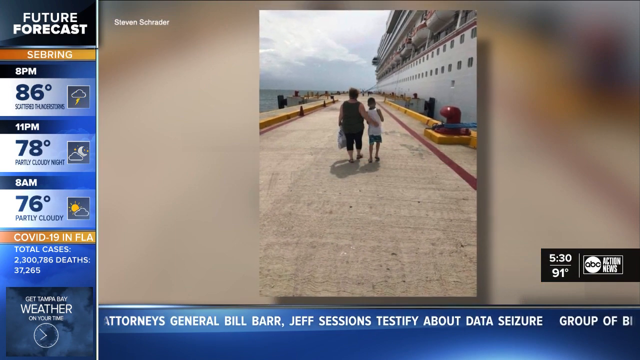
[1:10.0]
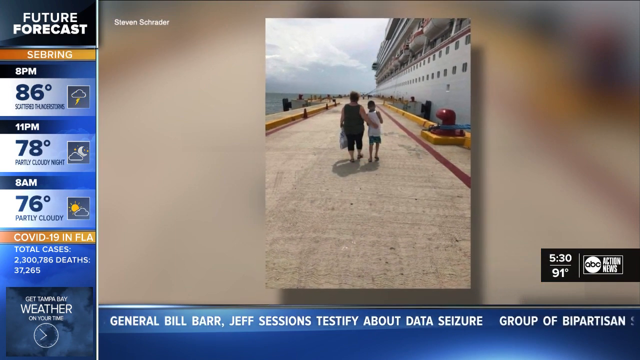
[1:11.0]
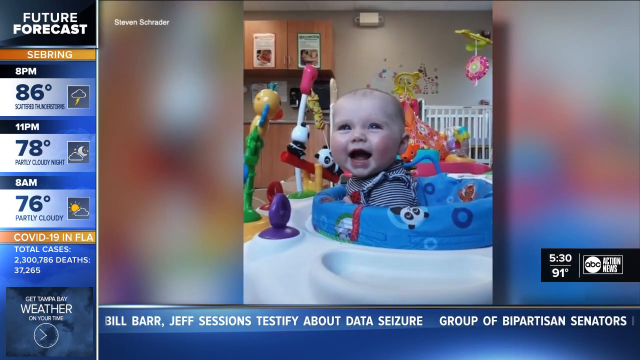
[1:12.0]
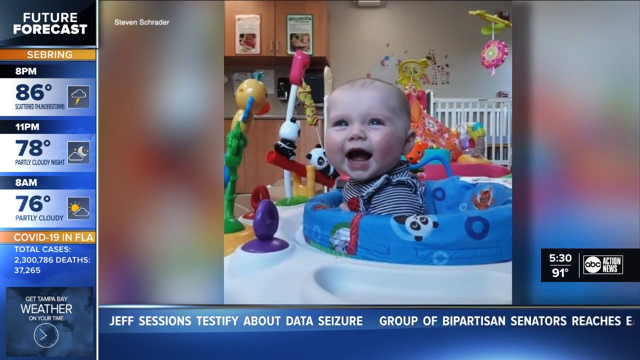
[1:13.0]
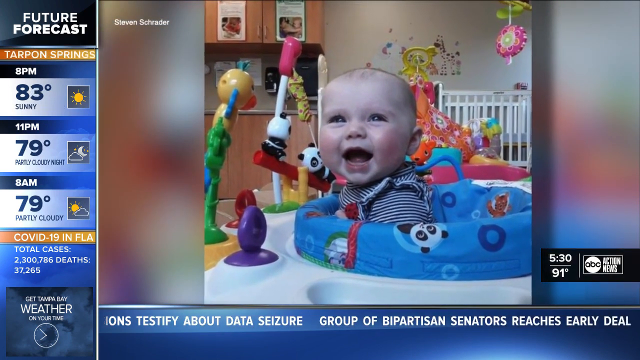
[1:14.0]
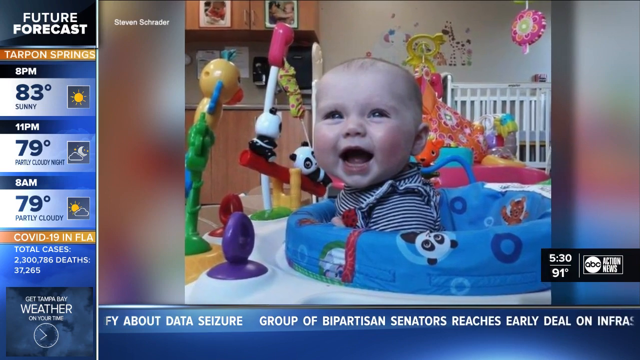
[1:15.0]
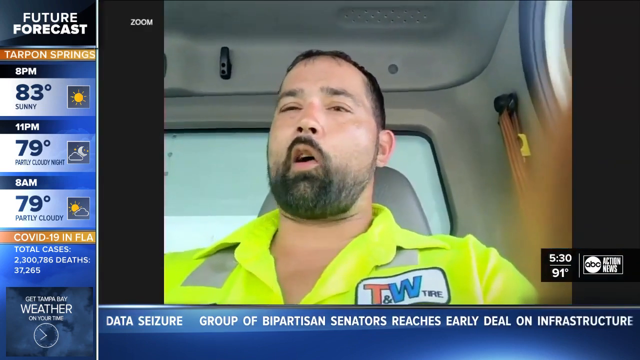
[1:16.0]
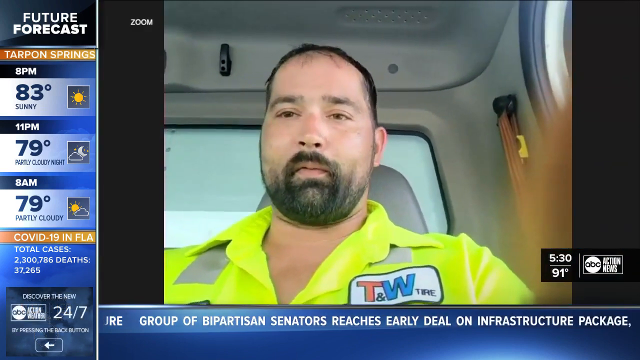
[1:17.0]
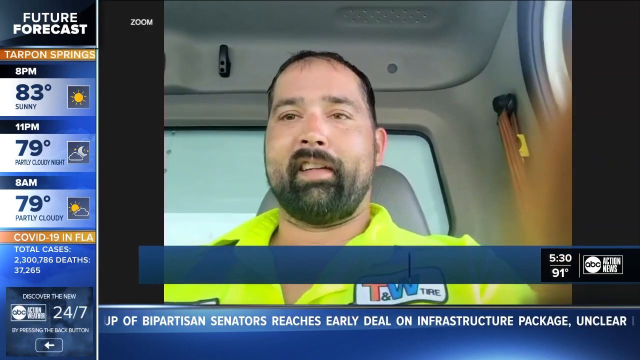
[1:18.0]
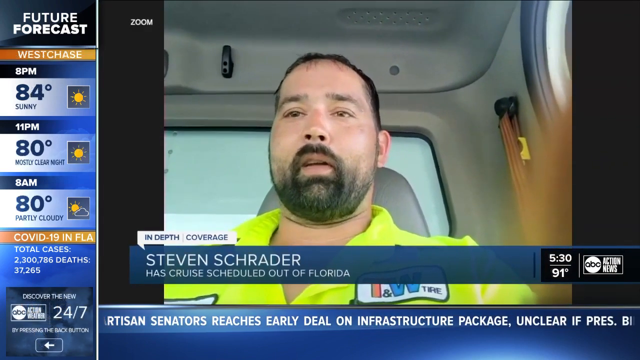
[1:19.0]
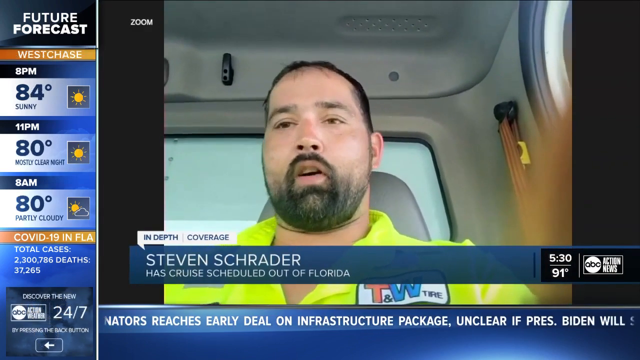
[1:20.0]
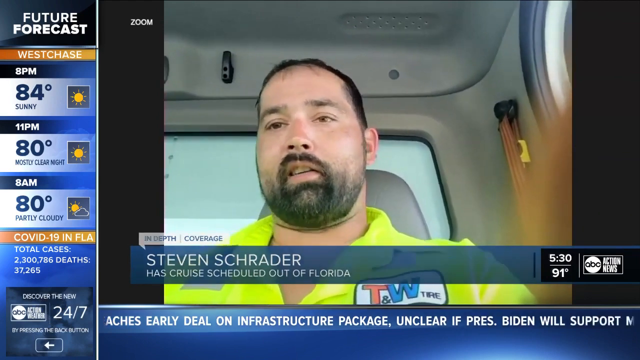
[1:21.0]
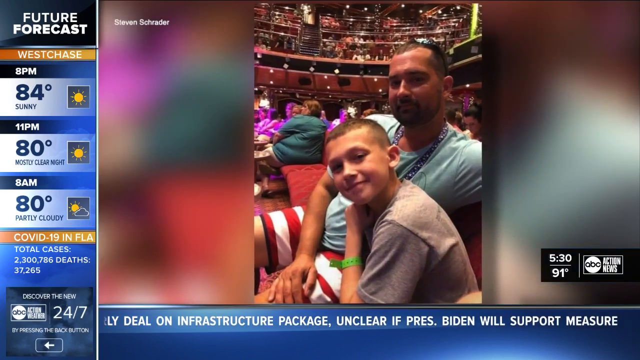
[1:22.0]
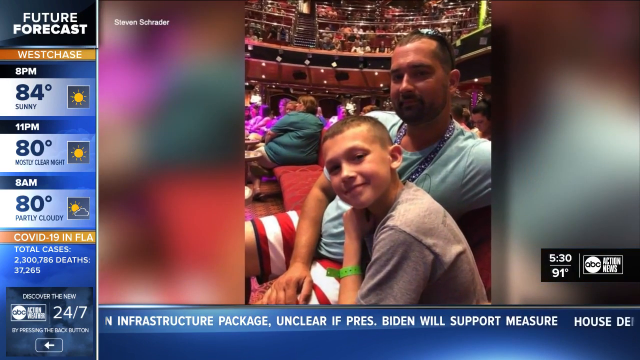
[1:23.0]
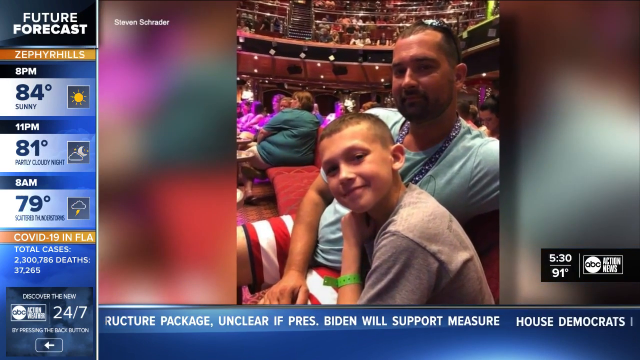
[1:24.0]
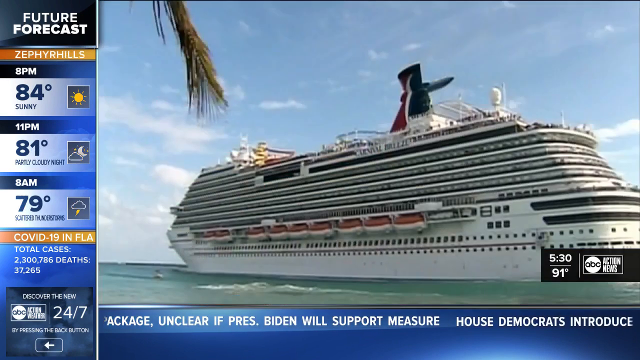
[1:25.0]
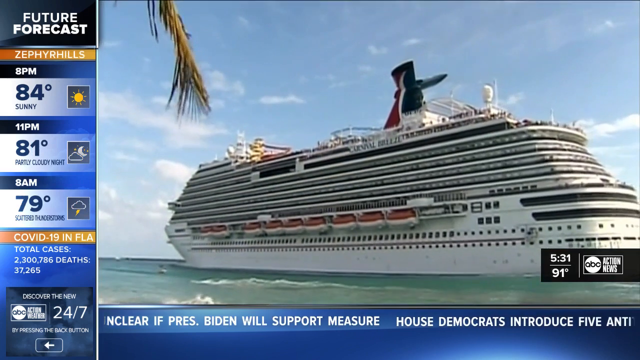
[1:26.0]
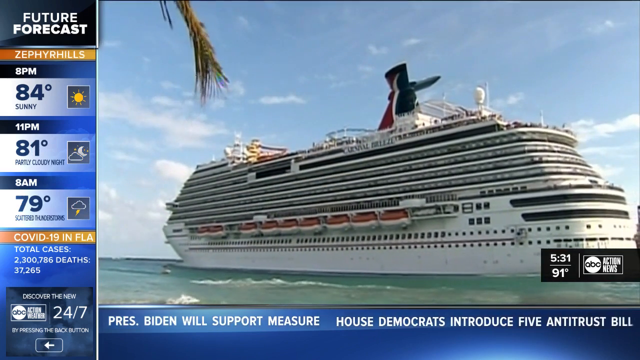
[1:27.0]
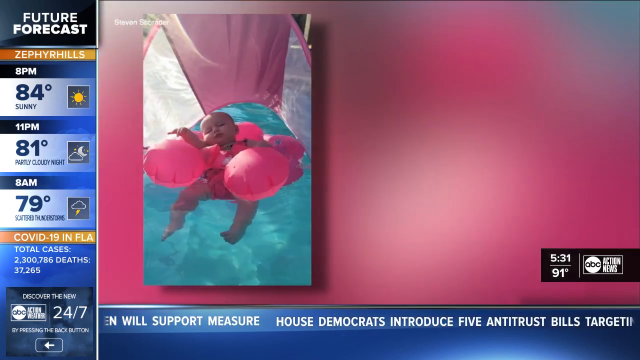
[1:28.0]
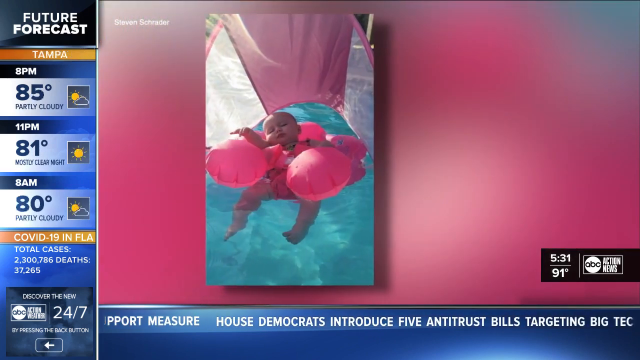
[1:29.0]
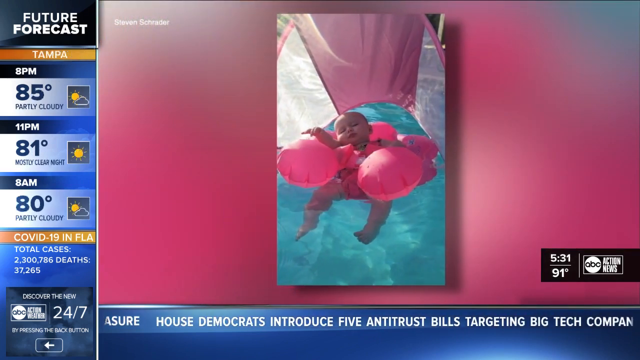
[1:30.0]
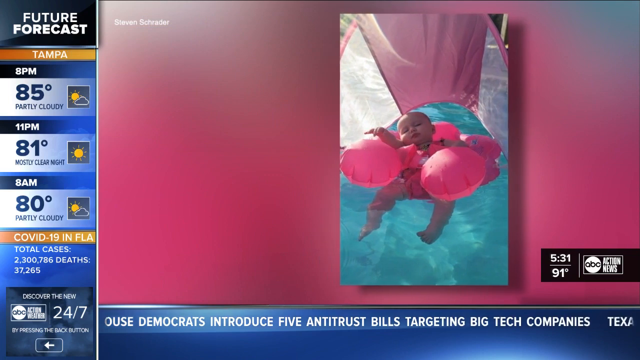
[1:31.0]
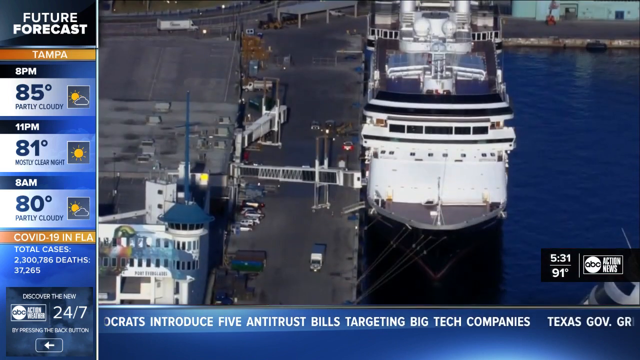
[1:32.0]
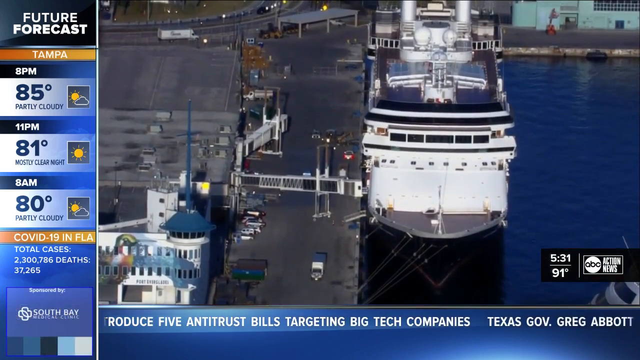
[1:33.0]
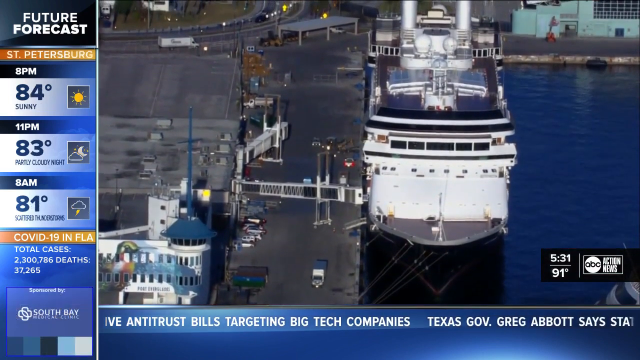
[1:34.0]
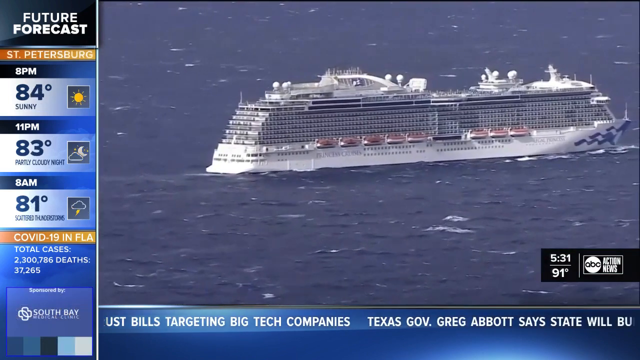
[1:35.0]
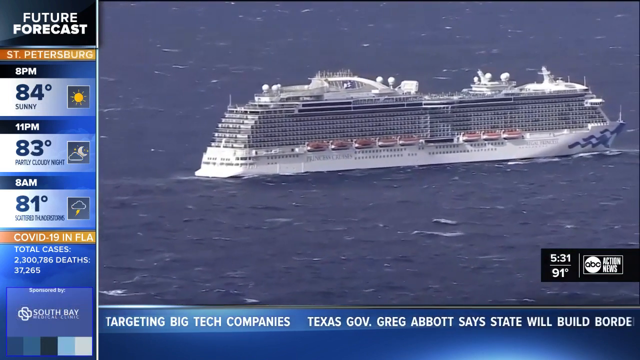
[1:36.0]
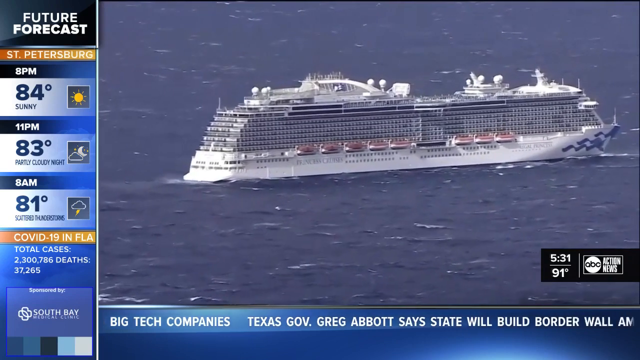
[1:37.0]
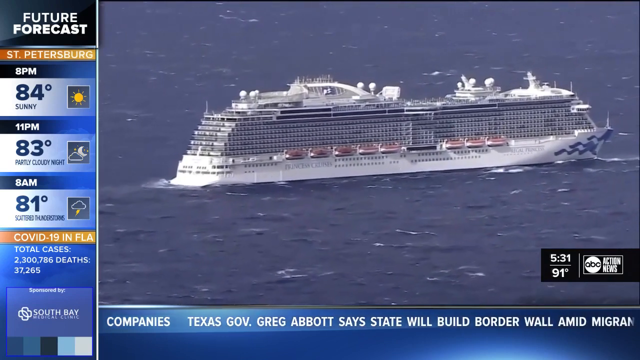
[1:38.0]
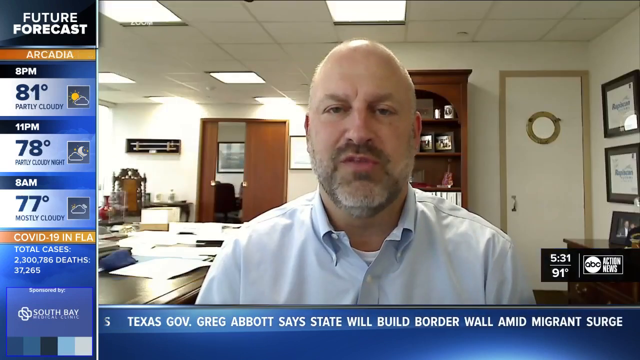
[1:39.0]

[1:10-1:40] Pictures of children appear, with a child smiling and surrounded by lots of toys. The person who was speaking earlier returns, with a label on his chest reading "Stephen Schrader has cruise scheduled out of Florida". He is then shown with a kid, followed by a picture of the cruise, a picture of a baby lounging in a pool, and two aerial pictures of the cruise ship. Another official then talks to the camera; he is bald and wears a white shirt, and is in an office space that looks crowded with objects and storage, with no one else in the frame. The ABC Action News logo on a black background stays in the bottom right, along with "531" and "91 degrees".